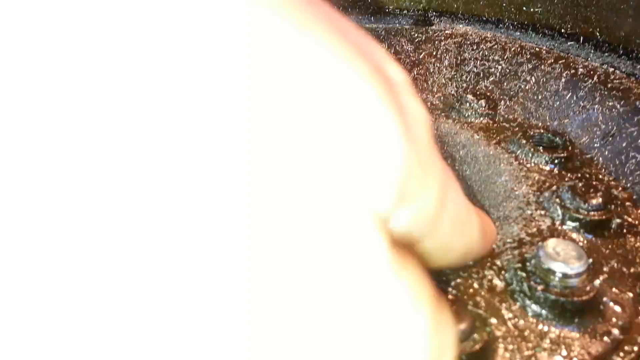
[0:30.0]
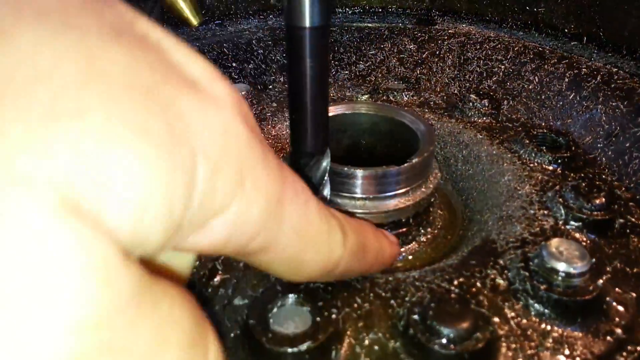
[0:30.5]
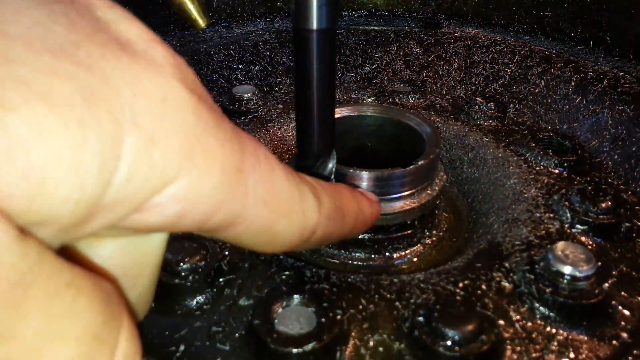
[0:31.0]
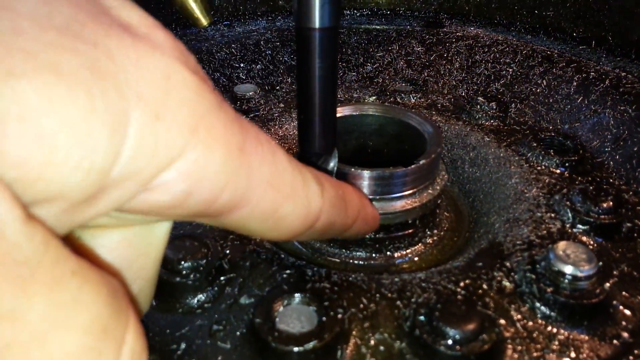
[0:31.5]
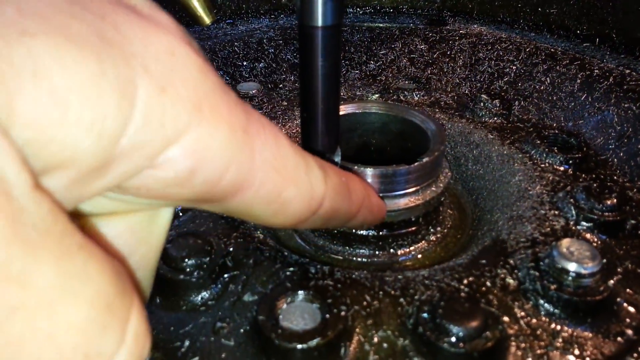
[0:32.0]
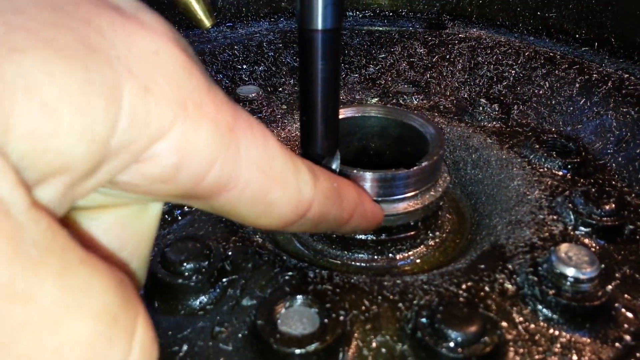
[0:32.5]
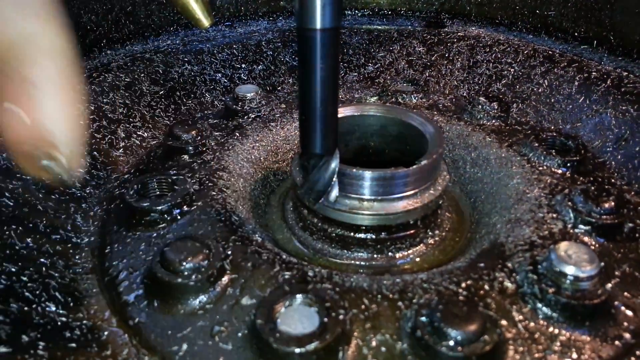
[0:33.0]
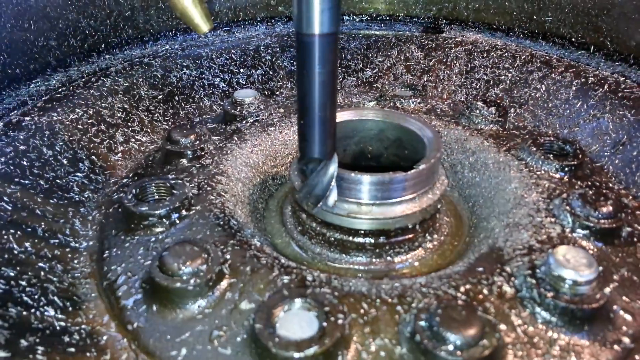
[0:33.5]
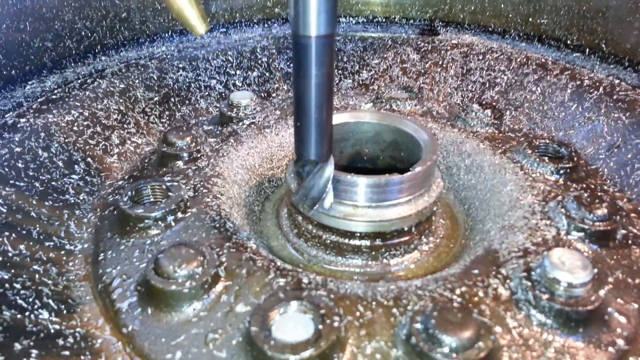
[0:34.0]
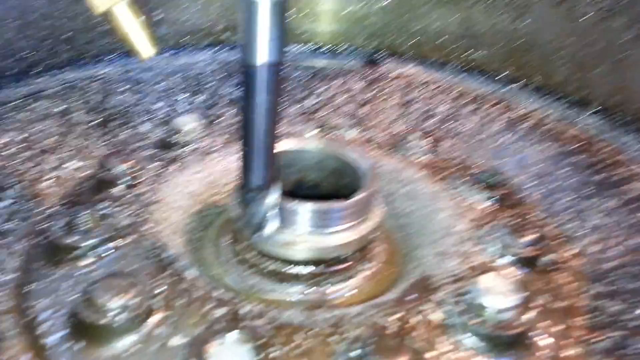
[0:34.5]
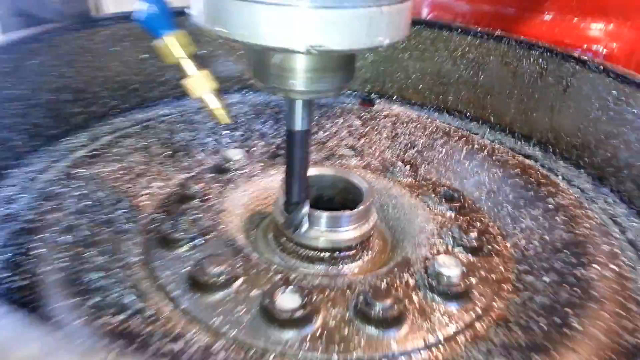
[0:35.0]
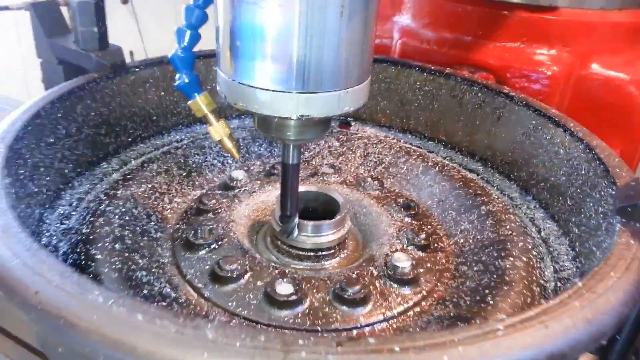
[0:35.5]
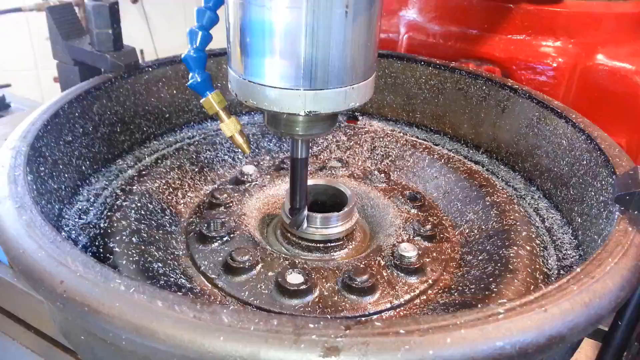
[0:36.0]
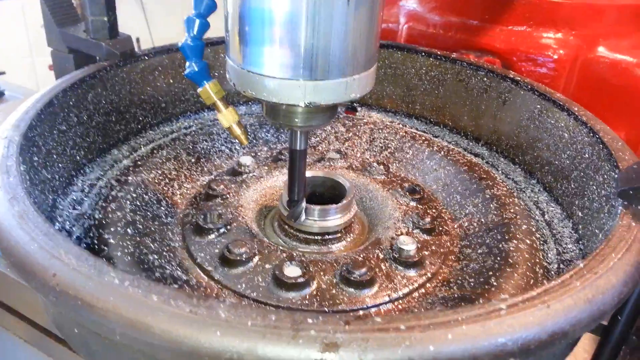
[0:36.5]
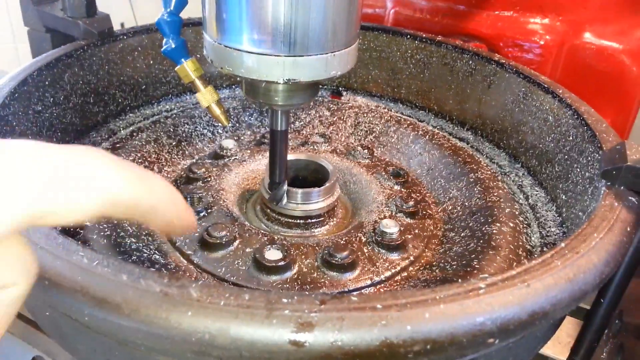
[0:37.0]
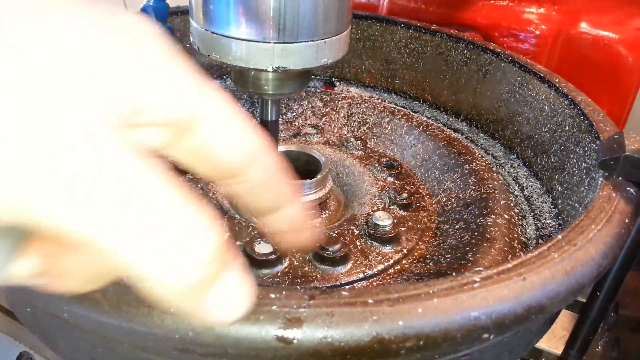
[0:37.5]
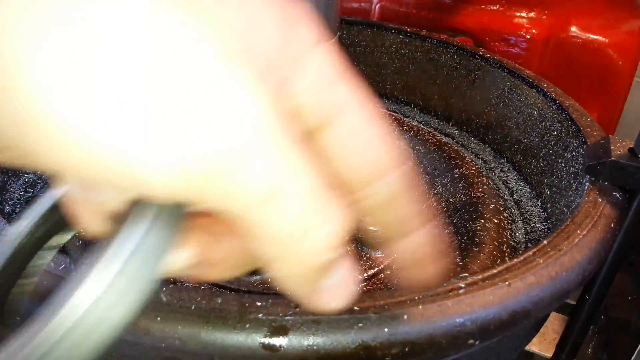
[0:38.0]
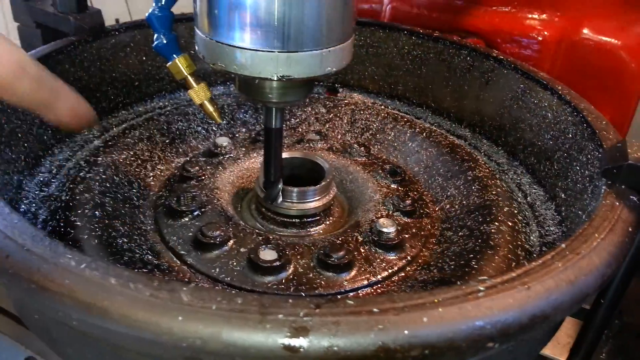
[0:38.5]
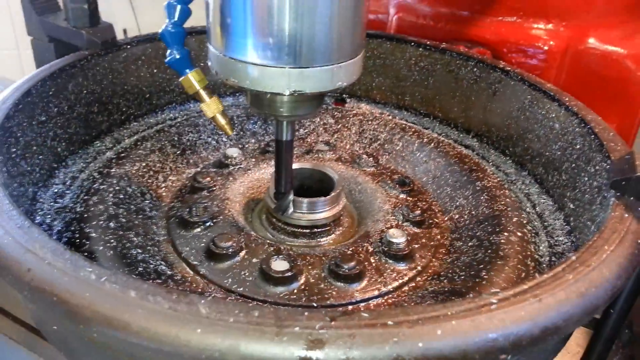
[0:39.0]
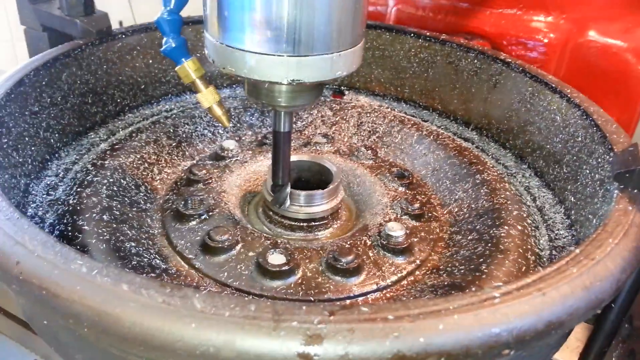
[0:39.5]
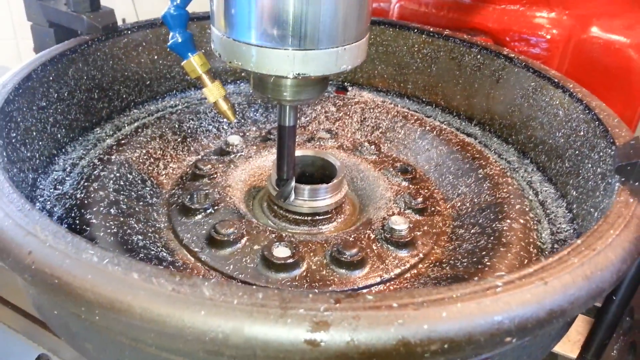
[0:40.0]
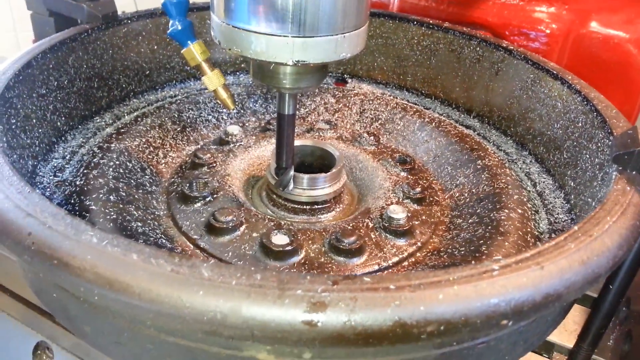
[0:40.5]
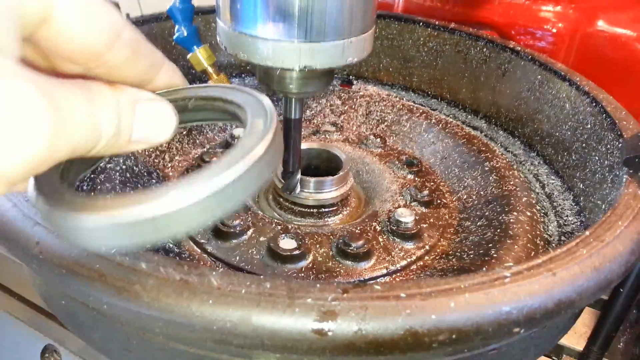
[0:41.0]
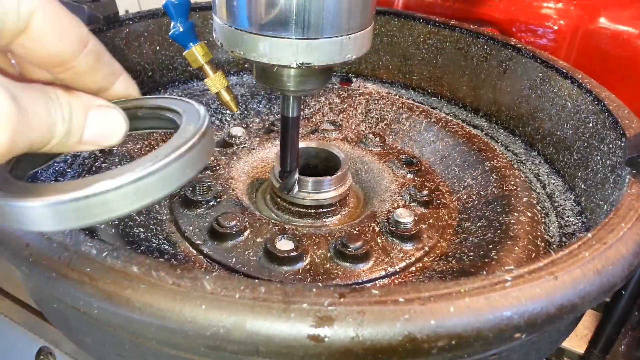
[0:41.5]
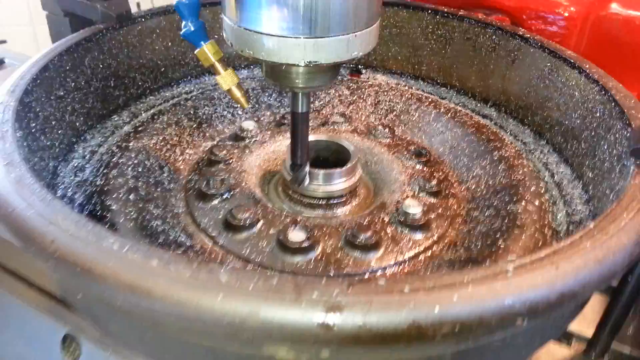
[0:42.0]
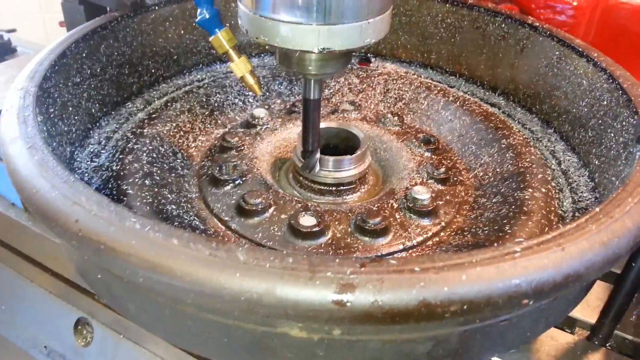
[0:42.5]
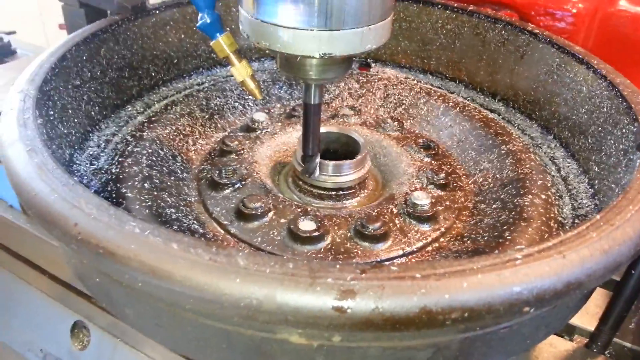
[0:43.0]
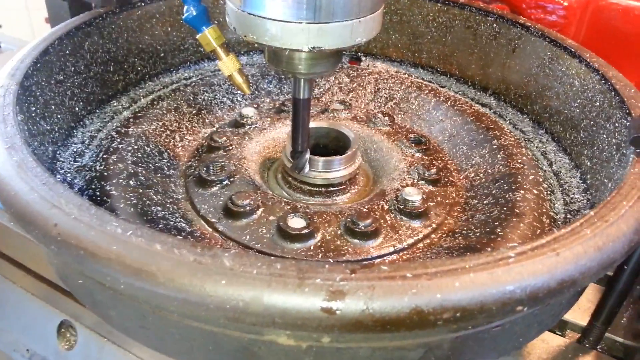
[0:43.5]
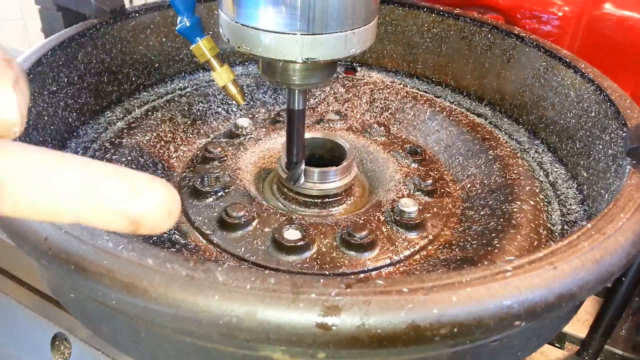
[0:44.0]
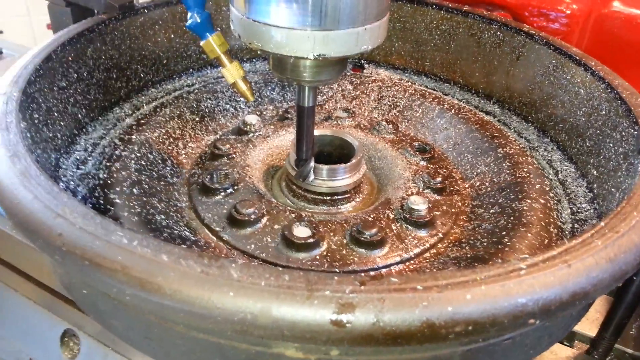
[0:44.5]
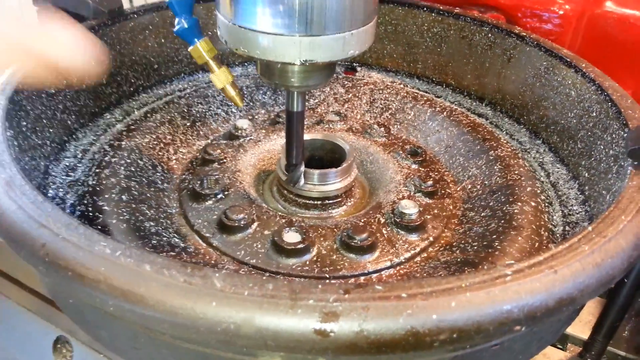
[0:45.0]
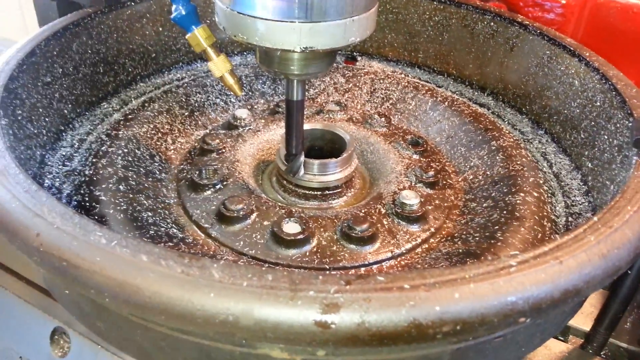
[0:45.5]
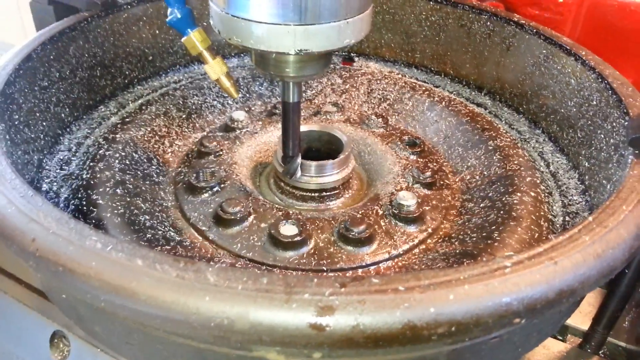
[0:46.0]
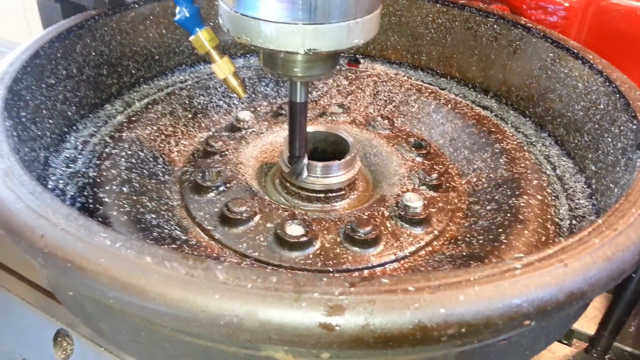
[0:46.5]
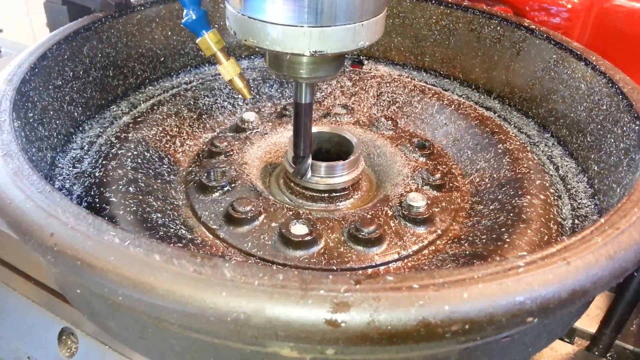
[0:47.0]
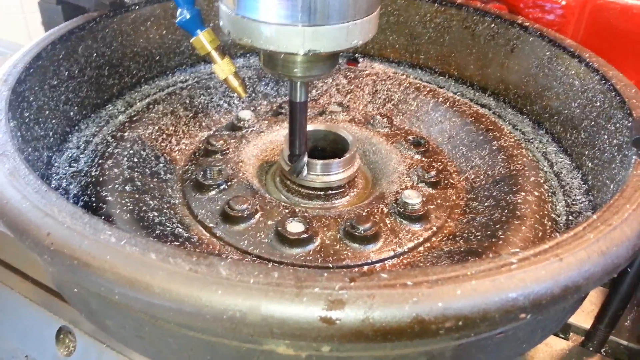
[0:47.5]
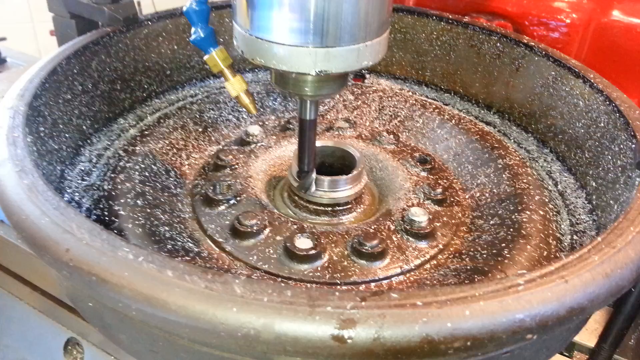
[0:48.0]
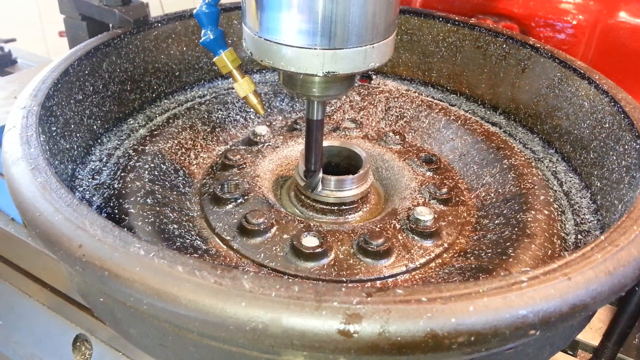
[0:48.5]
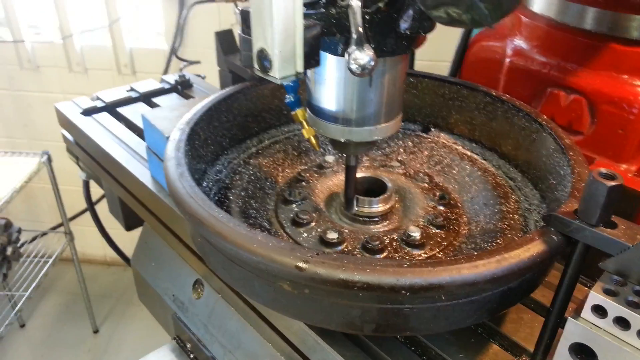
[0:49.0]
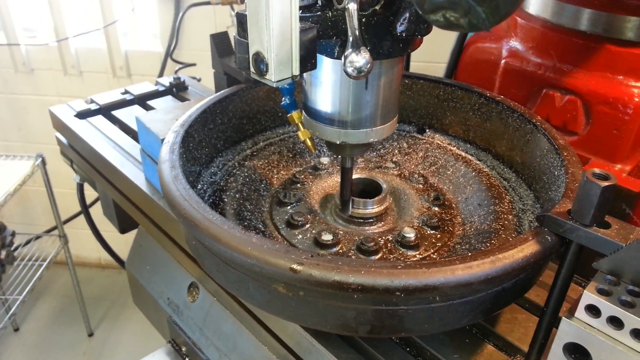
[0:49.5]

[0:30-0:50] A hand points toward the hub underneath the drill, with a finger on the ring in the middle of the hub, right next to where the drill comes down onto it. The hand moves away and the camera moves out. The finger comes back in, and the rest of the hand is visible, with the bearing under the pinky finger as the hand shows the edges of the hub. The bearing is then put in to compare it to the size of the inside of the hub. The finger points at the drill, pulls back out, and points at it again. The hub has a lot of white speckles all around it. On the left side next to the drill, a blue part comes down with a copper fitting on the end that looks like it will spray some kind of liquid onto the drill bit.